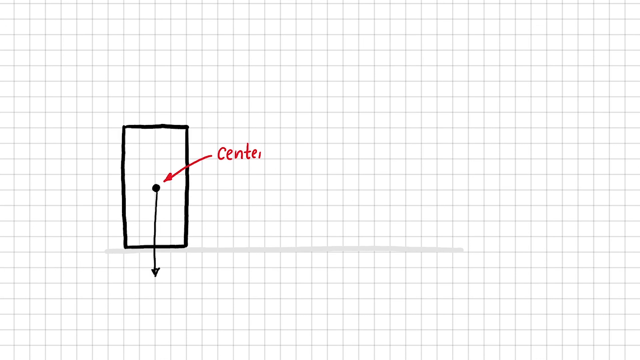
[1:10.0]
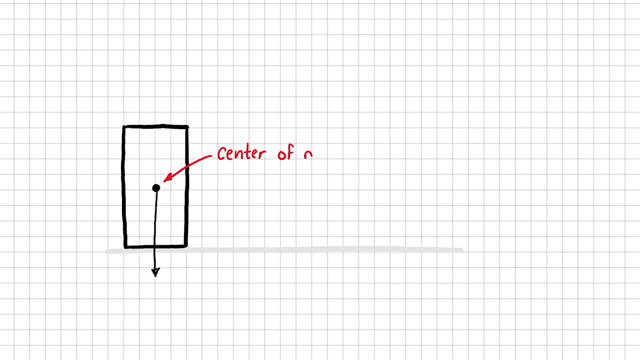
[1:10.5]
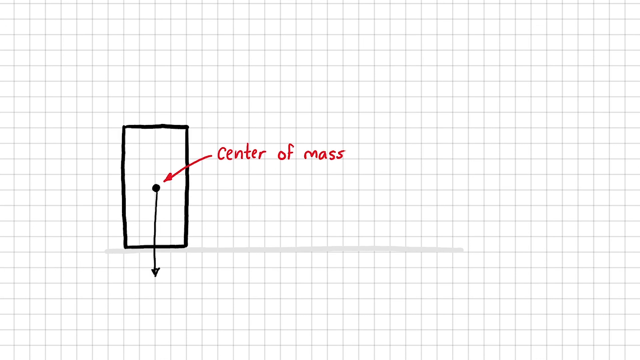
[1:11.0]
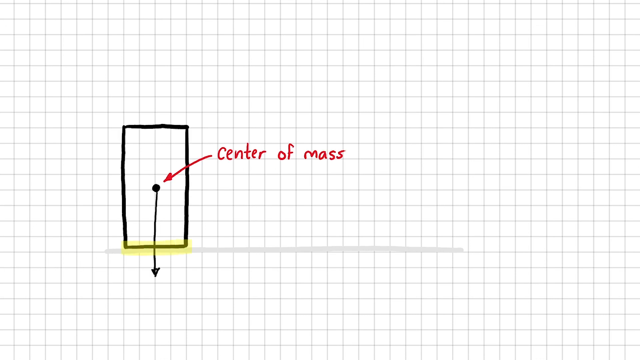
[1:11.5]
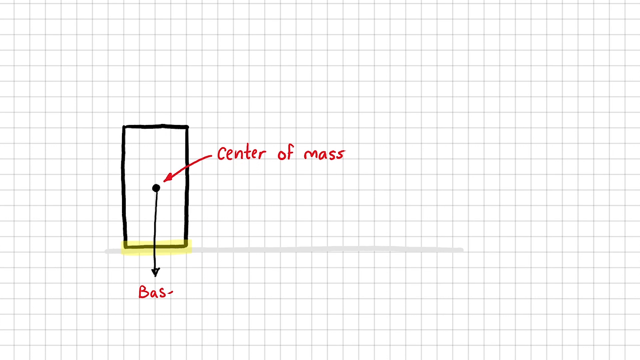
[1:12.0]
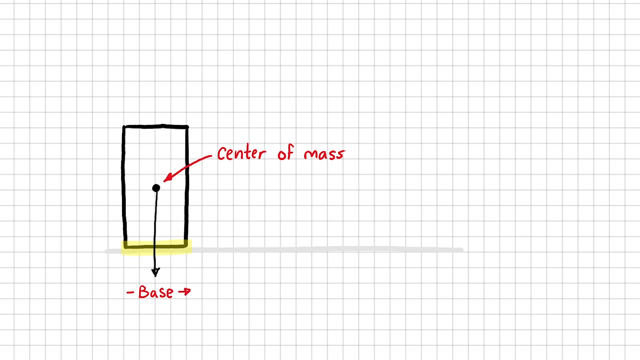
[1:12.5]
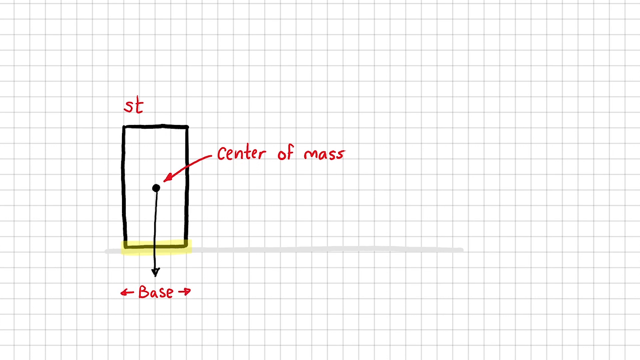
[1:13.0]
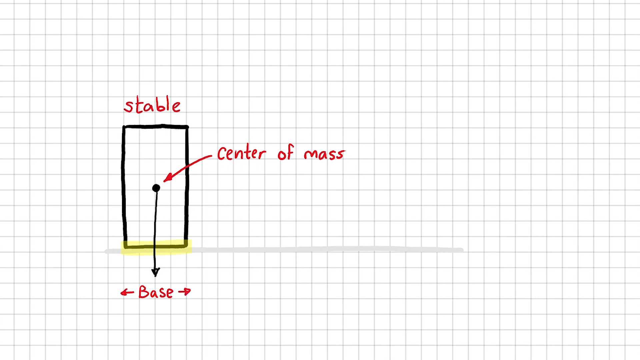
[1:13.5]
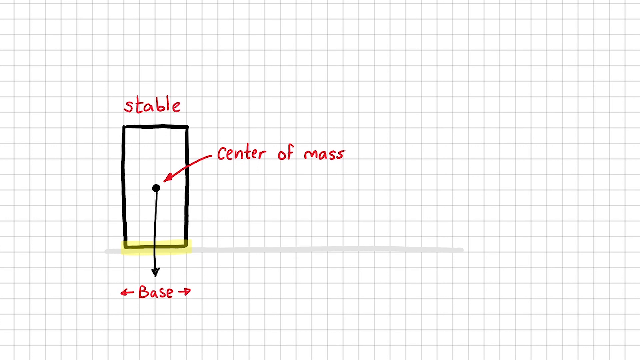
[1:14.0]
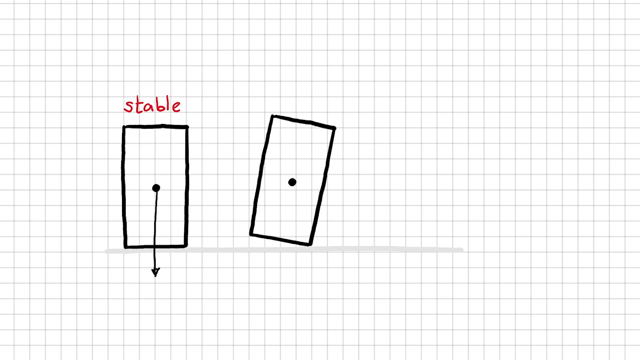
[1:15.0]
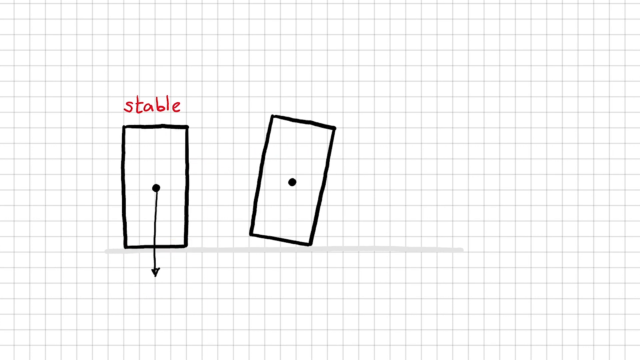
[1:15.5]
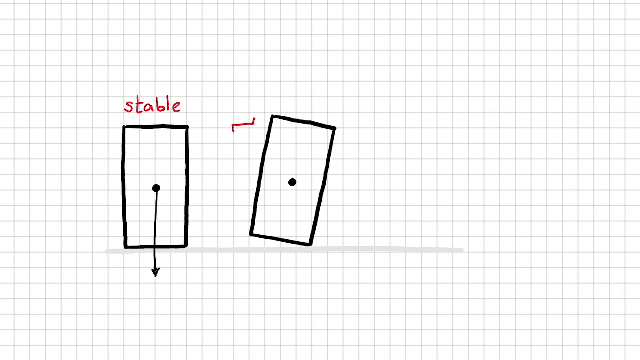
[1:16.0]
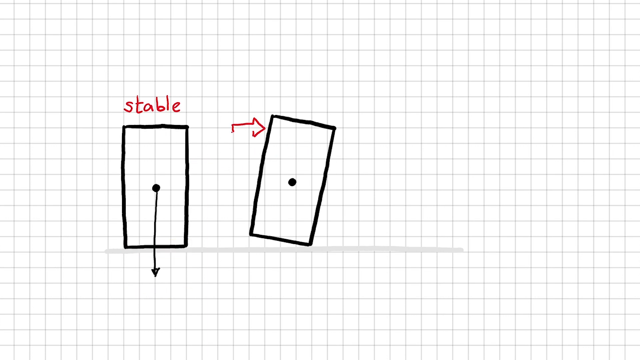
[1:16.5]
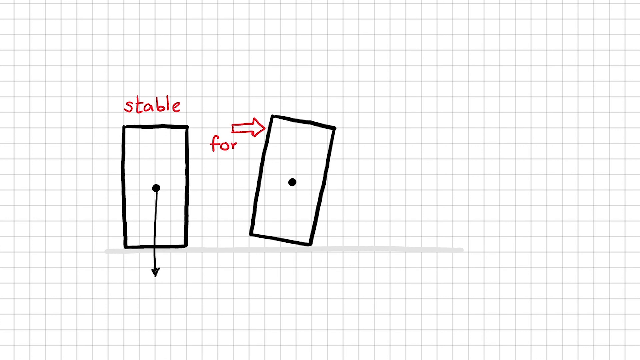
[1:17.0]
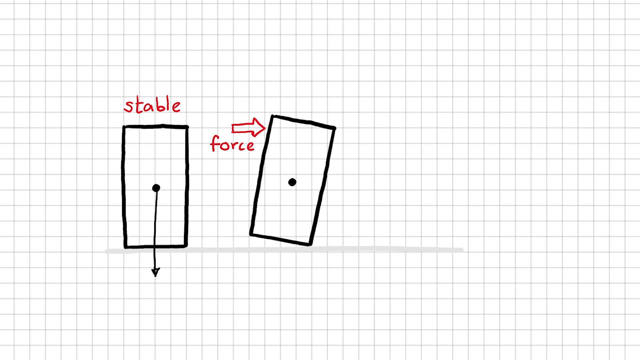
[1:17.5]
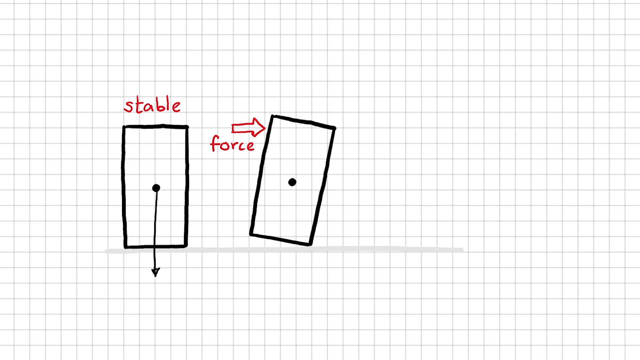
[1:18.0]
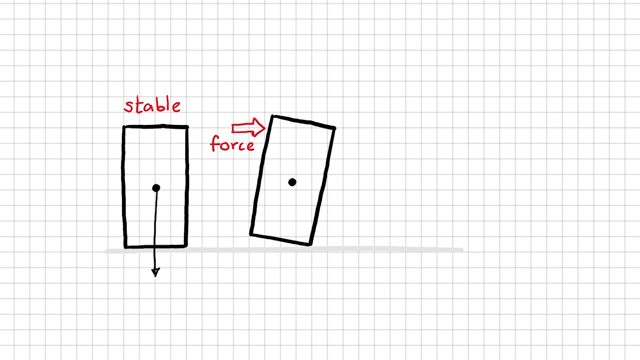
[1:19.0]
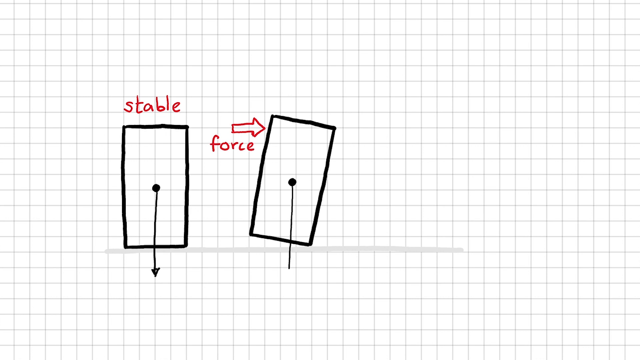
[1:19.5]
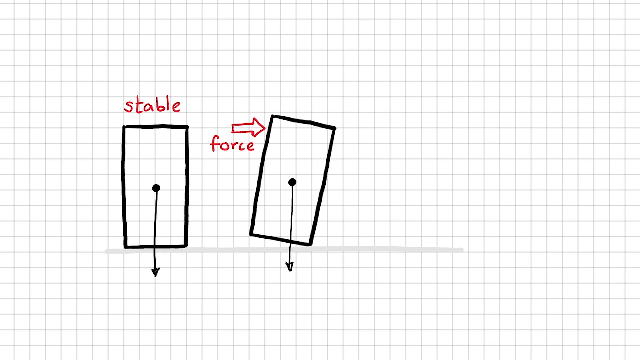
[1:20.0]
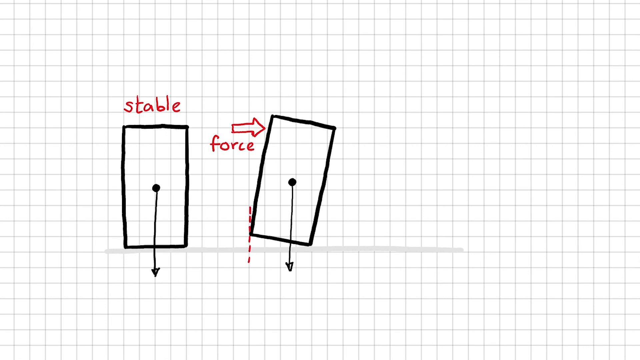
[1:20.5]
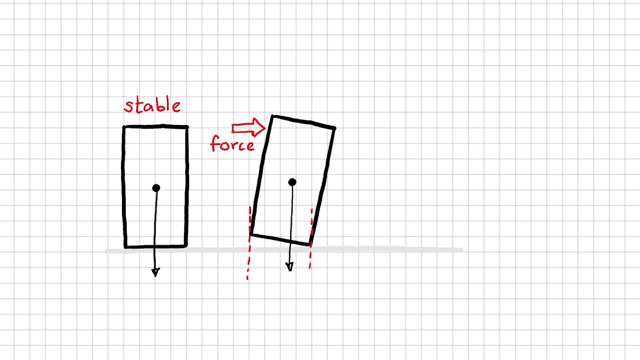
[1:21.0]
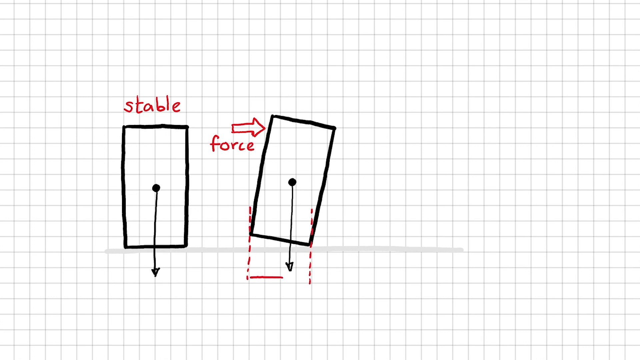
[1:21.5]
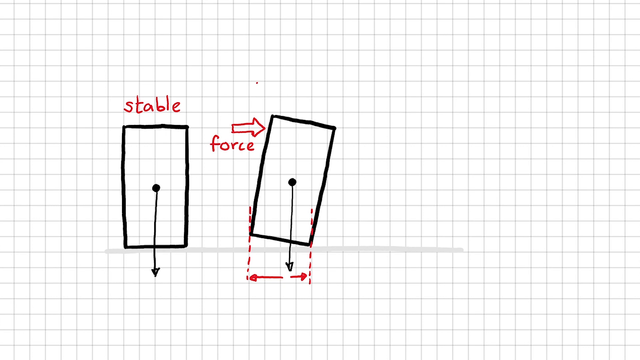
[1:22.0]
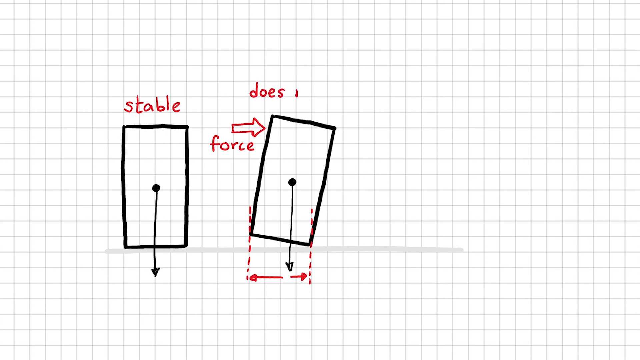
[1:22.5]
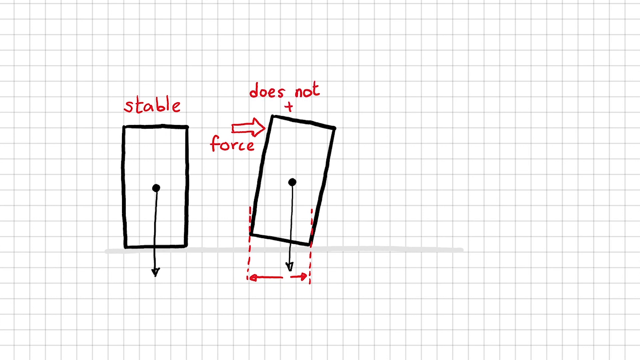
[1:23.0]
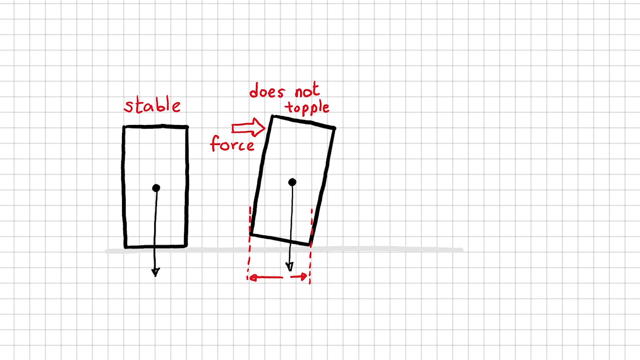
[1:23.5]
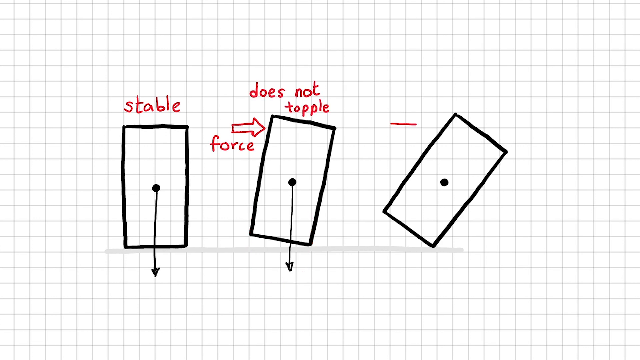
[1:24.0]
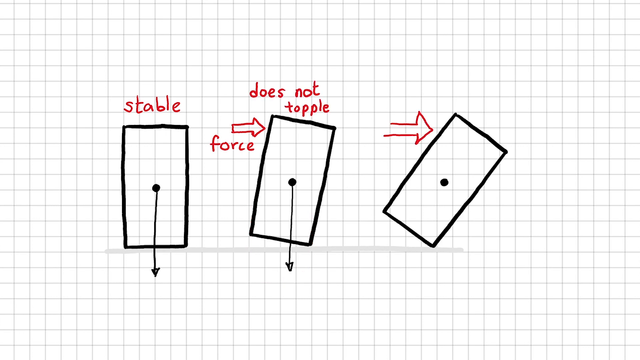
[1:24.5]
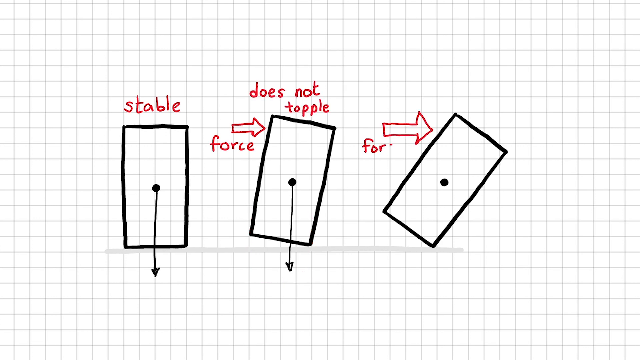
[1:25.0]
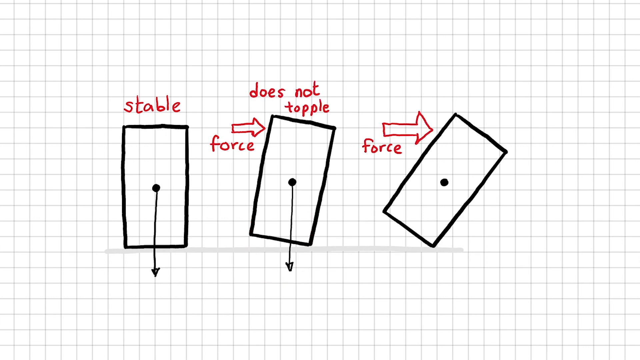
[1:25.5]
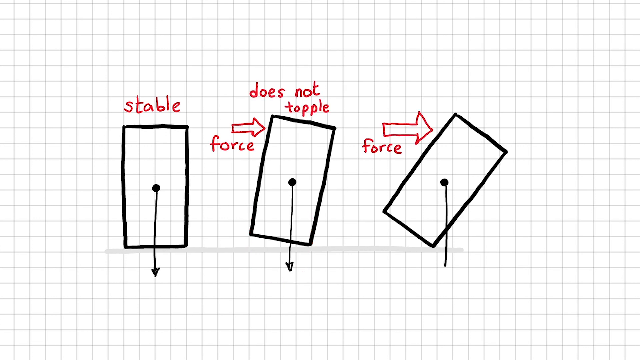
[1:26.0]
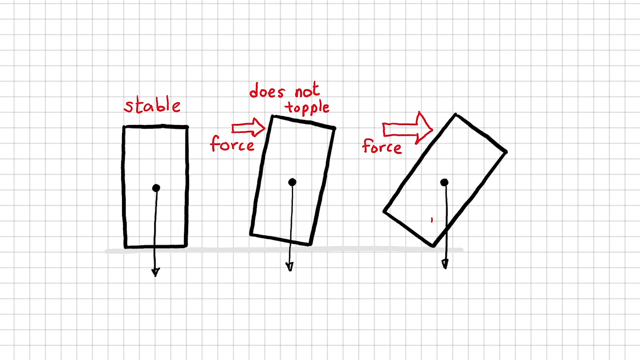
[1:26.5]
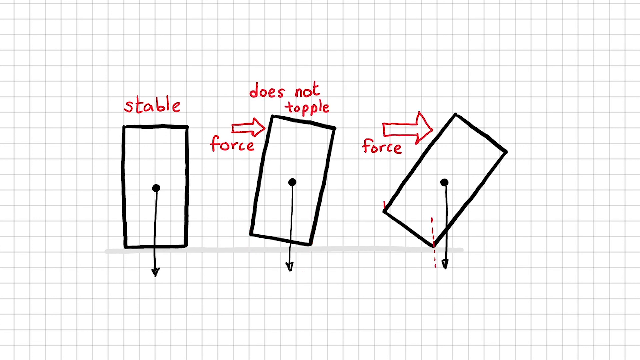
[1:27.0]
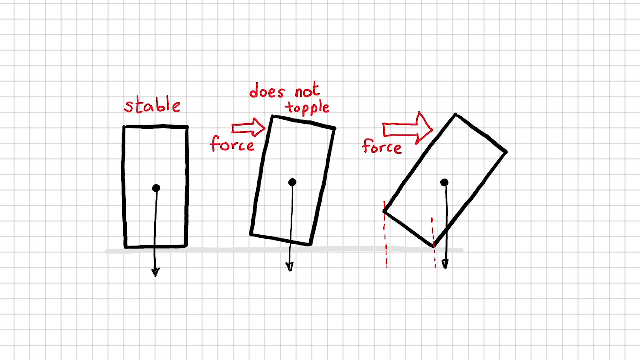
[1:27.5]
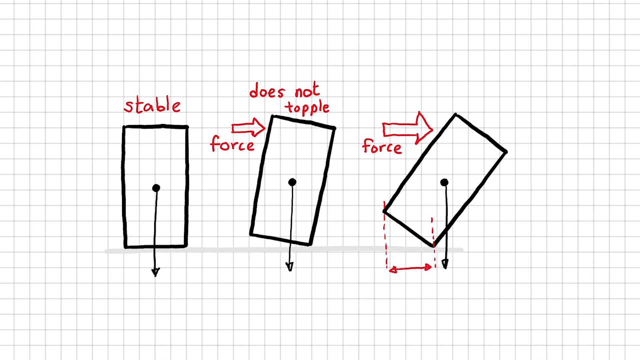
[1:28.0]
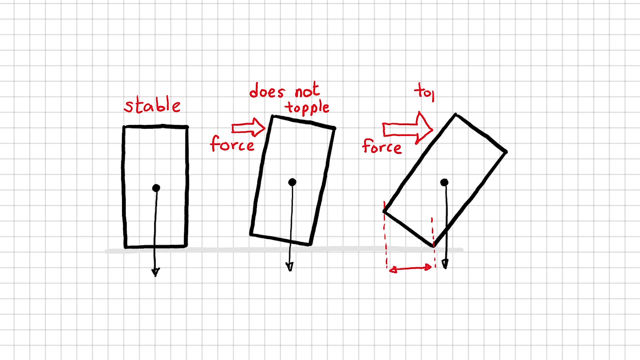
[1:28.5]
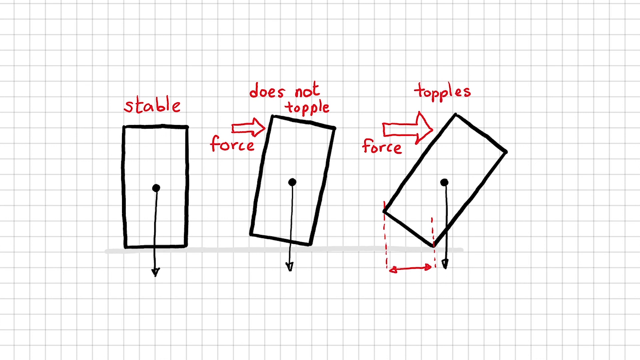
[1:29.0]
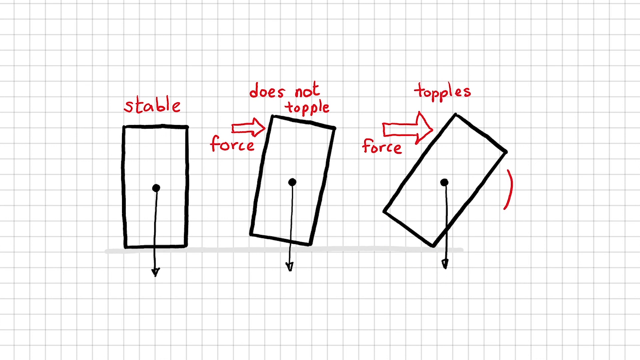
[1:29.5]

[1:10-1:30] A rectangle is shown with an arrow pointing downwards, another arrow indicating the center of mass, and another arrow beneath the red side of the rectangle showing the base. A second rectangle shows the force exerted on it, with a label reading "force" and red dotted lines showing the rectangle's displacement from its initial position. Another arrow points to "does not topple". The rectangle is shown moving from its initial position as a result of the forces on it.